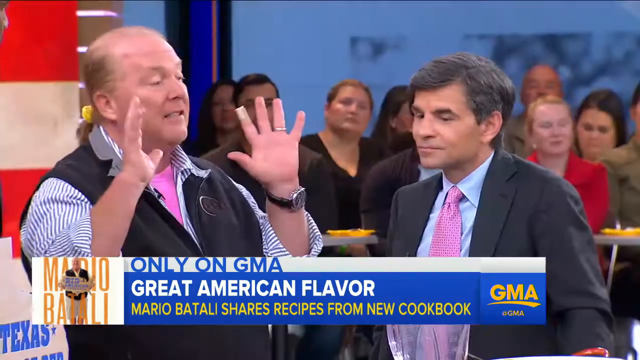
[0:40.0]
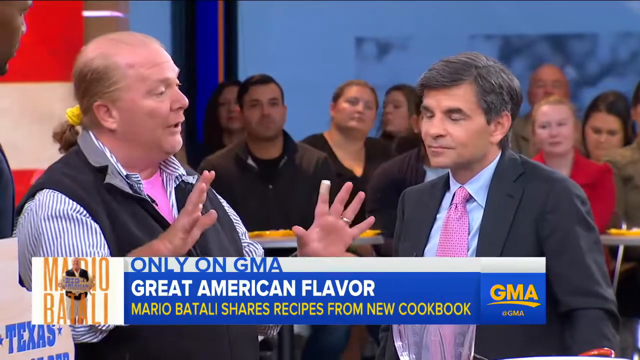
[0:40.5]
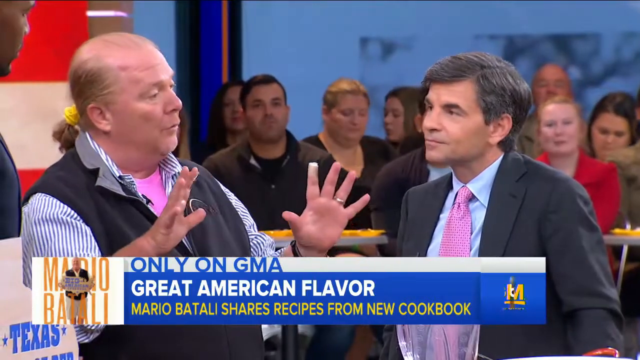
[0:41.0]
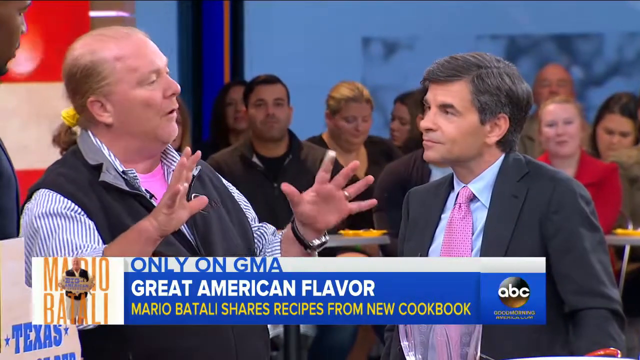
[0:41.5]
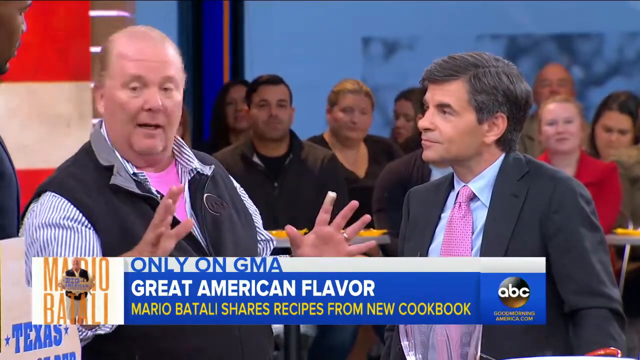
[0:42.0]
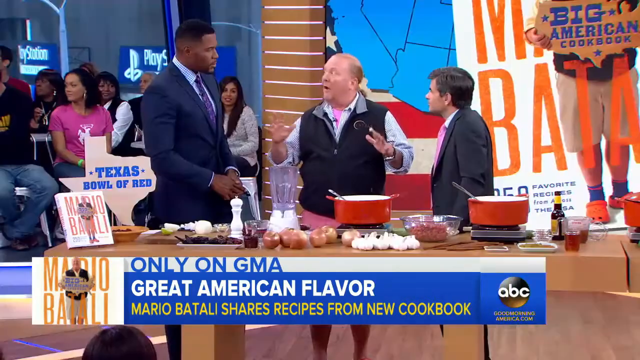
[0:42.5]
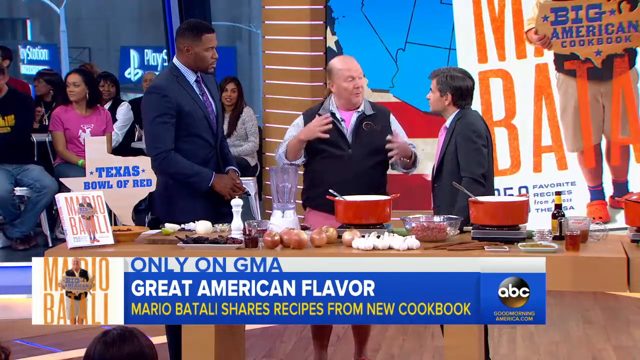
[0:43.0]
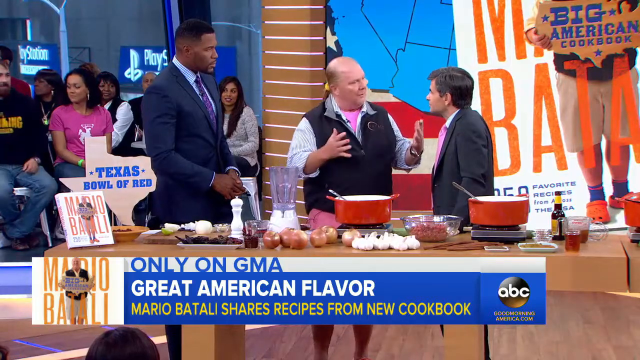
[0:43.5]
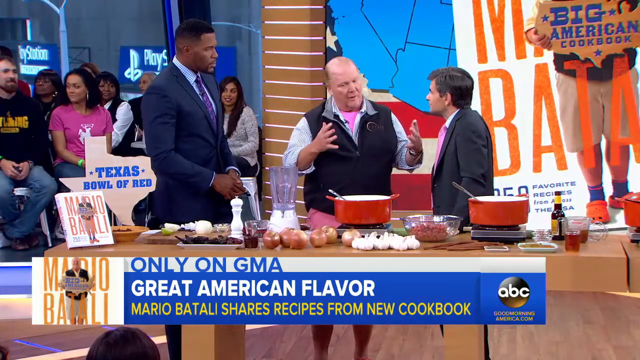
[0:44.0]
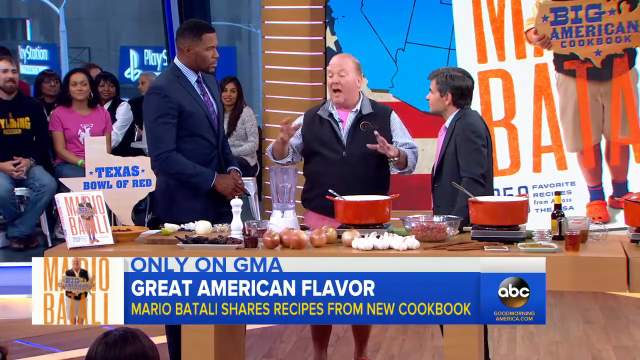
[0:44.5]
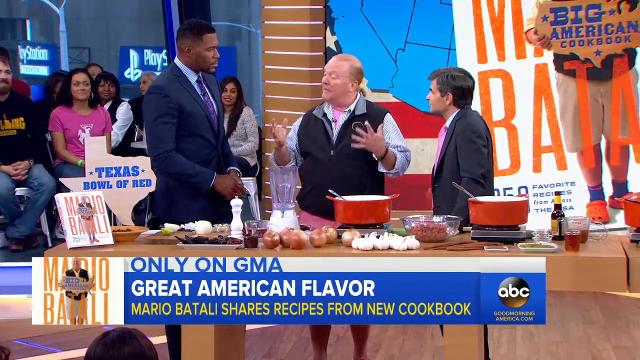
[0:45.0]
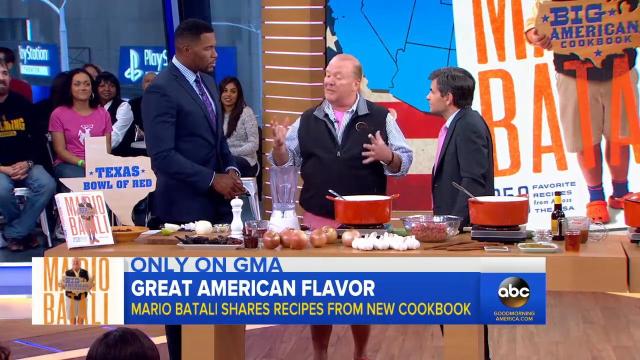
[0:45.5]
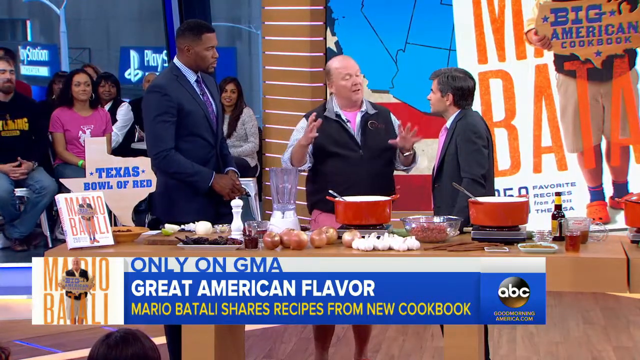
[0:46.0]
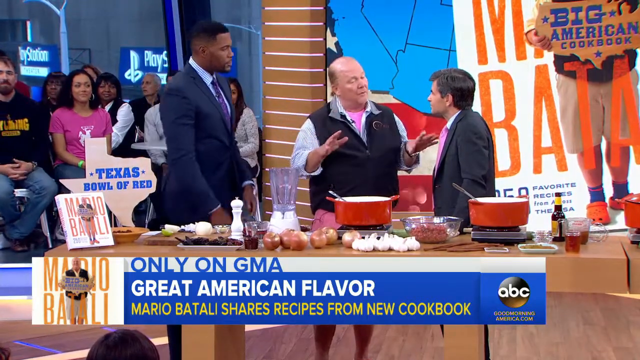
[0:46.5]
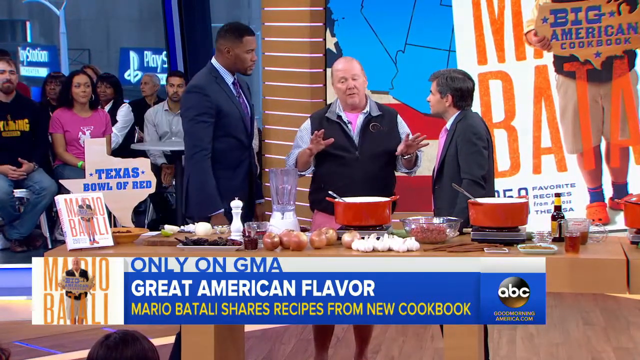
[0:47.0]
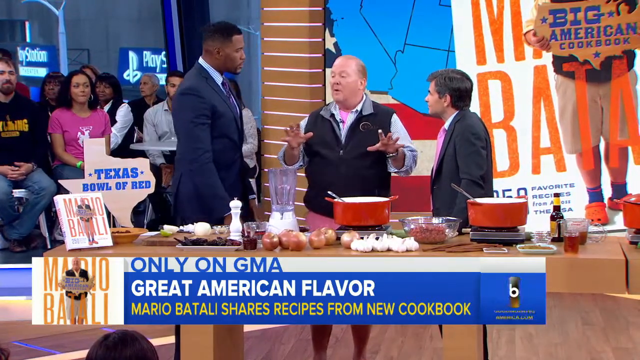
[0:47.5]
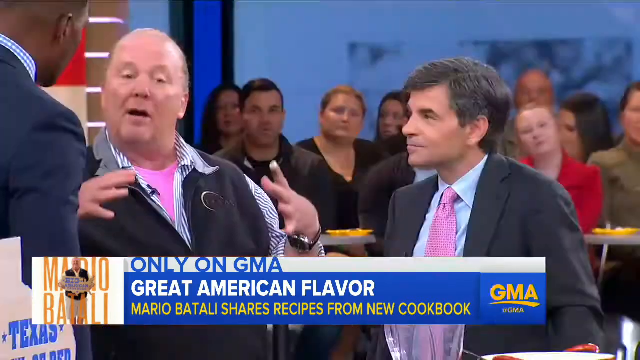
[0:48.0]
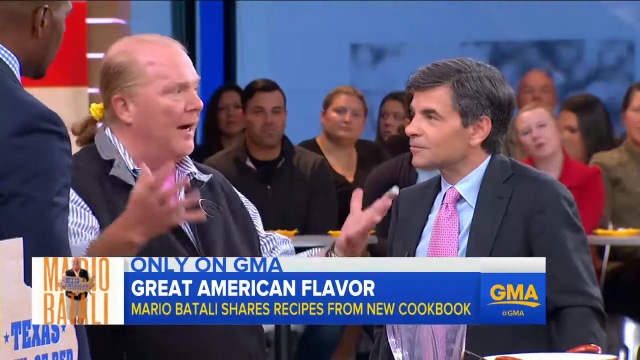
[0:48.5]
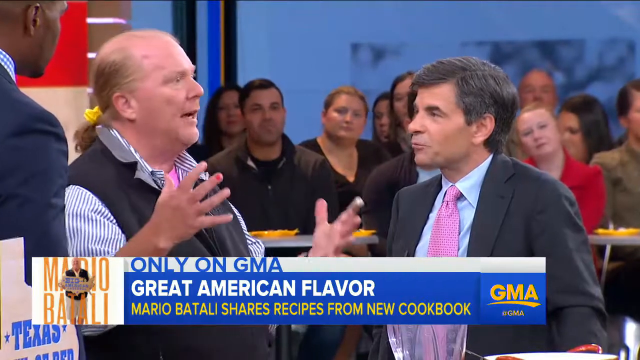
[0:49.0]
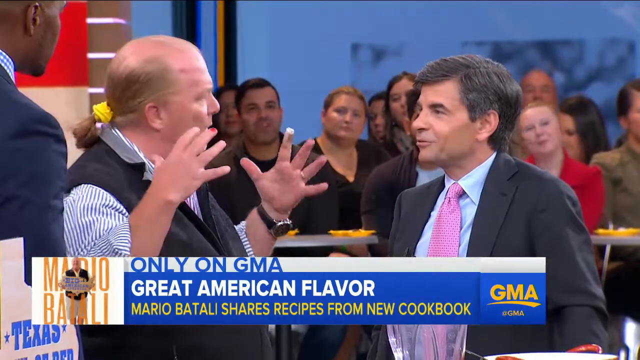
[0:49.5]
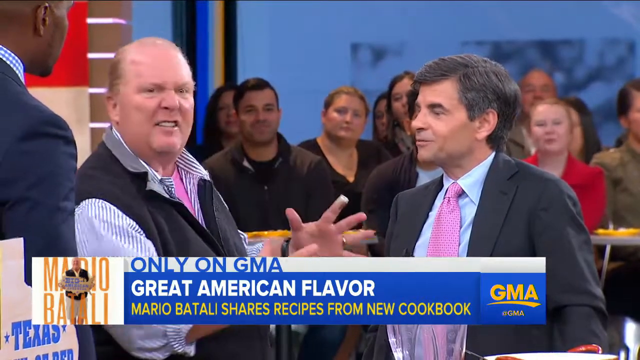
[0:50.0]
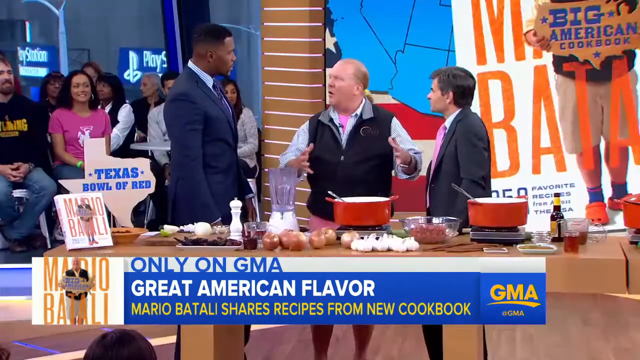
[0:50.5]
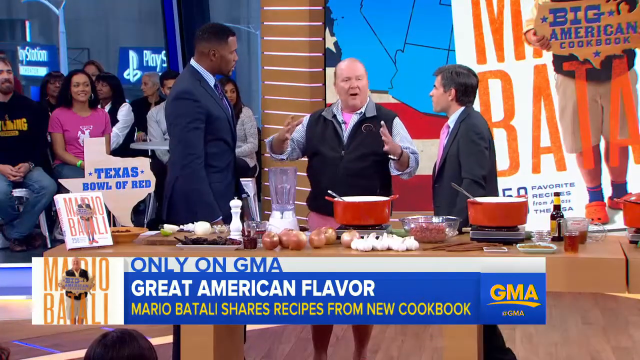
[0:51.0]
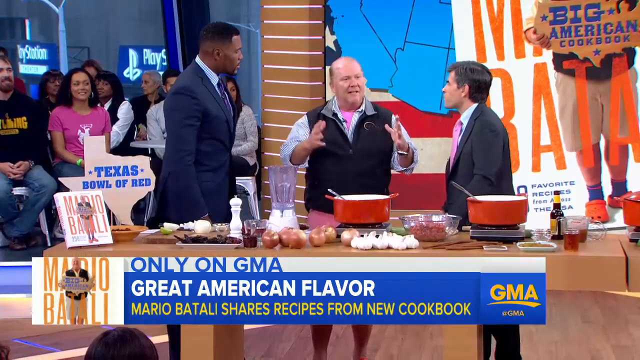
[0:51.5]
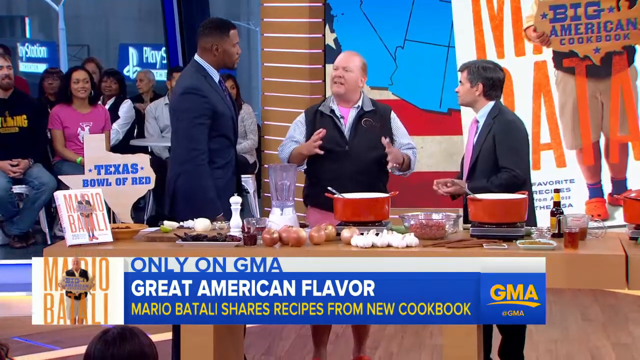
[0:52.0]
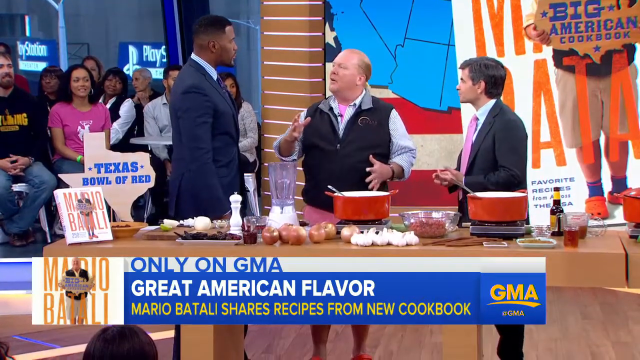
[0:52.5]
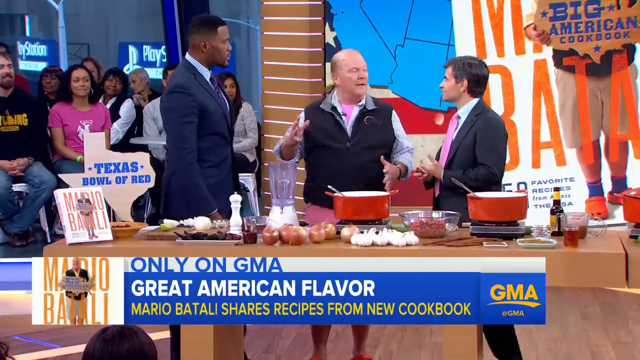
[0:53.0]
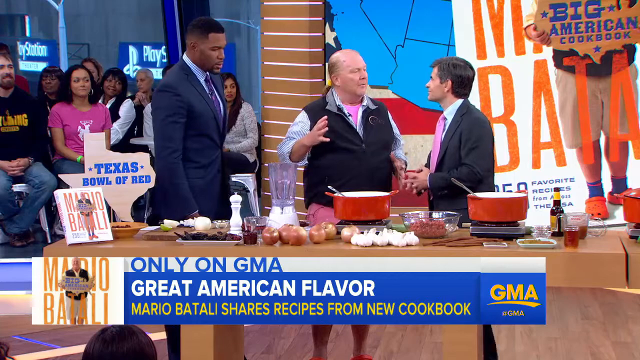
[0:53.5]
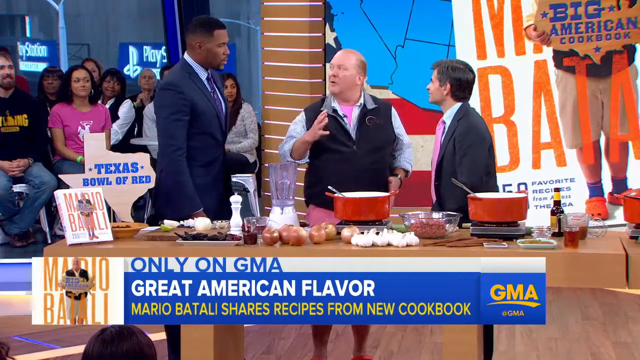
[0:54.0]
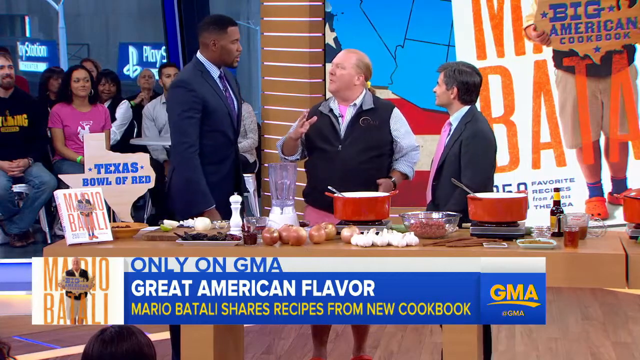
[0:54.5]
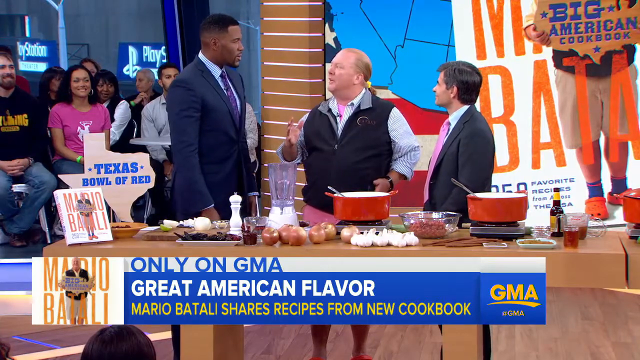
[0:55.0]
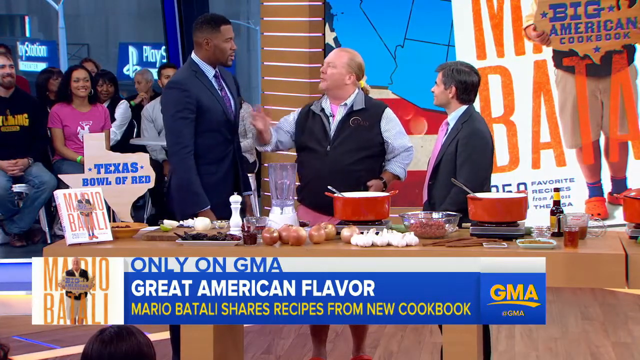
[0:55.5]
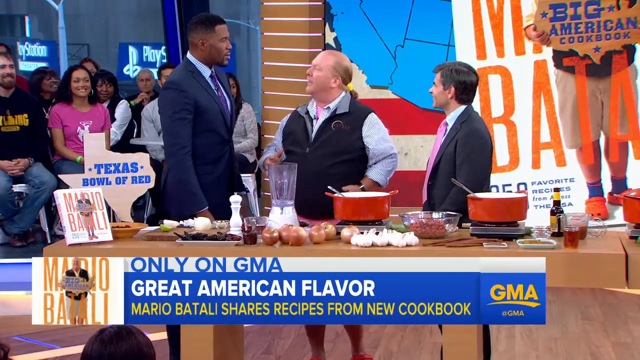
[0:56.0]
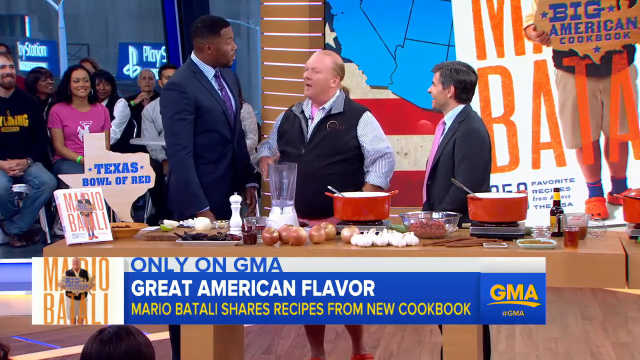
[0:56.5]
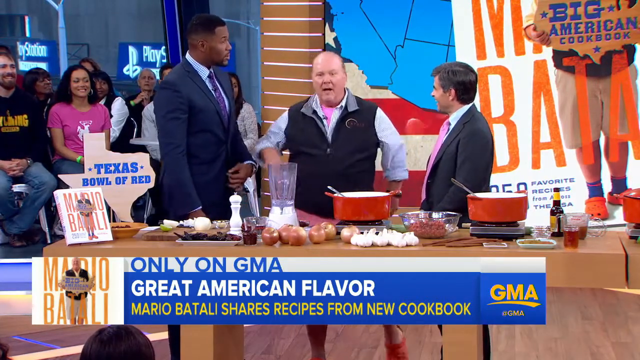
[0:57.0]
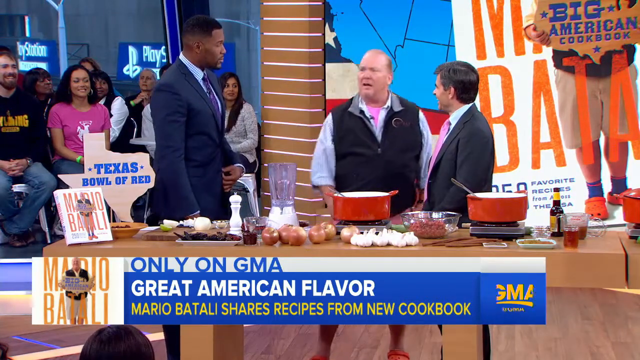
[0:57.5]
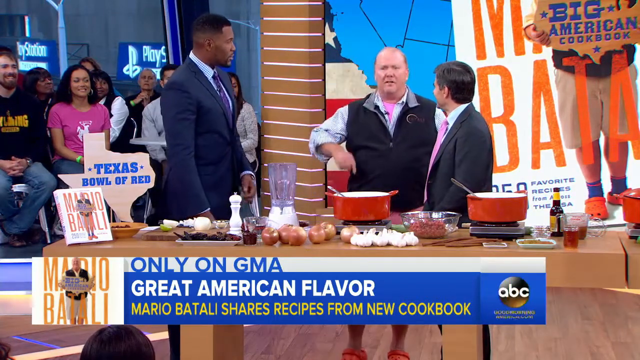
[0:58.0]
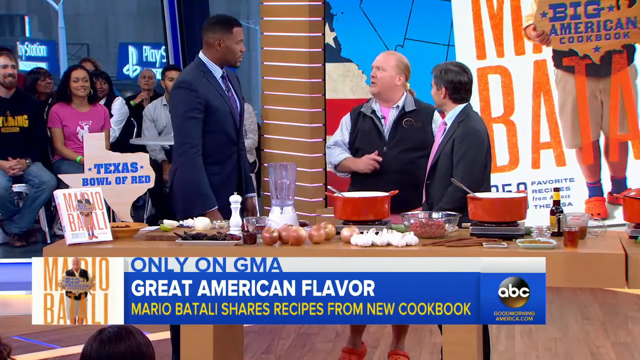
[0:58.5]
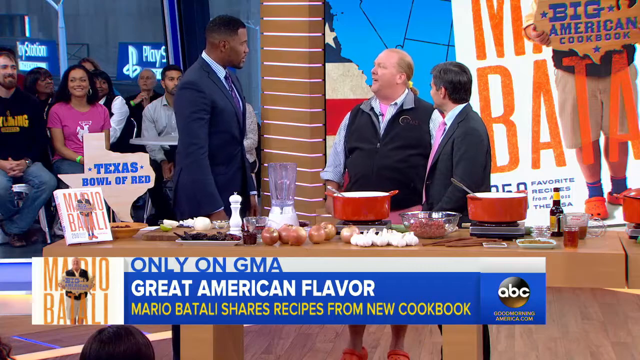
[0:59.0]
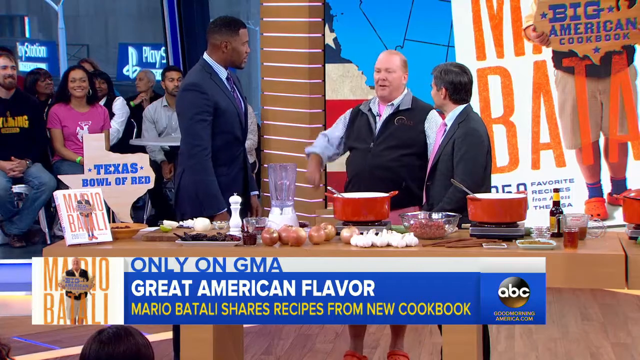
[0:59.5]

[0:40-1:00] The bald man wears a striped blue and white shirt and a watch turned backwards on his wrist. He puts both arms up, showing a ring on the ring finger of his left hand. He has a ponytail with a yellow bow tie behind him. A banner appears at the bottom of the screen reading "Only on GMA, Great American Flavor. Mario Batali shares recipe from his new cookbook." He talks, using his hands expressively, puts a hand backwards, and raises both hands, apparently talking about his cookbook. The camera pans to an angle showing all three men, with a crowd behind them talking. The man on his right nods in agreement, while the man on his left seems to put his hands together as he talks. The man on his right then looks down at the food on the kitchen table. A PlayStation ad is visible in the background.